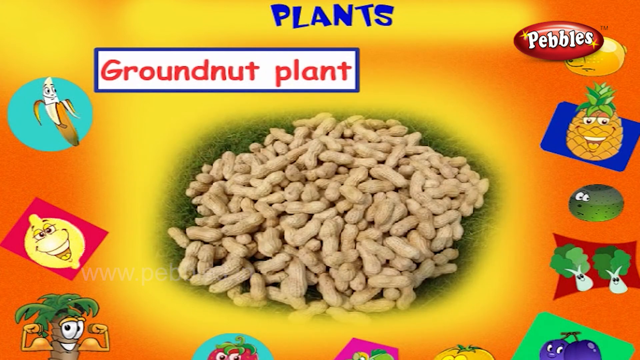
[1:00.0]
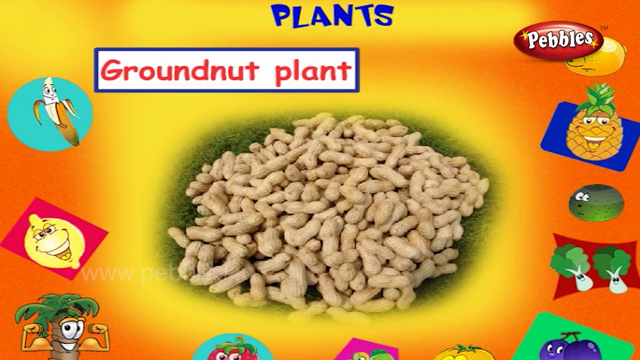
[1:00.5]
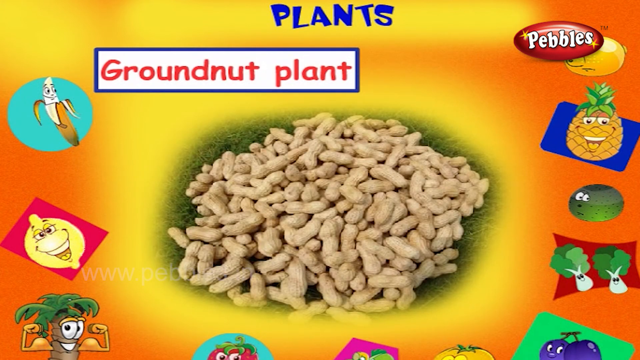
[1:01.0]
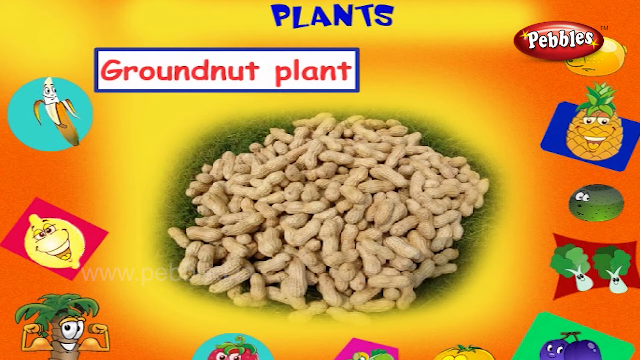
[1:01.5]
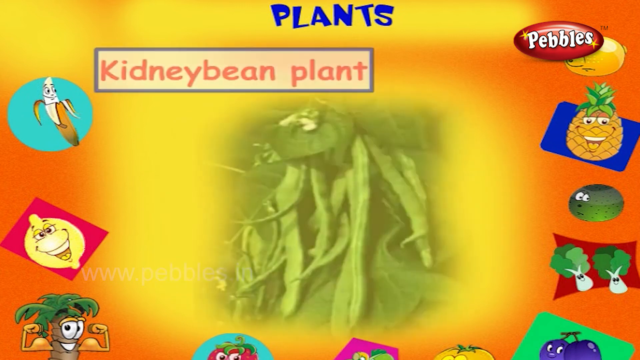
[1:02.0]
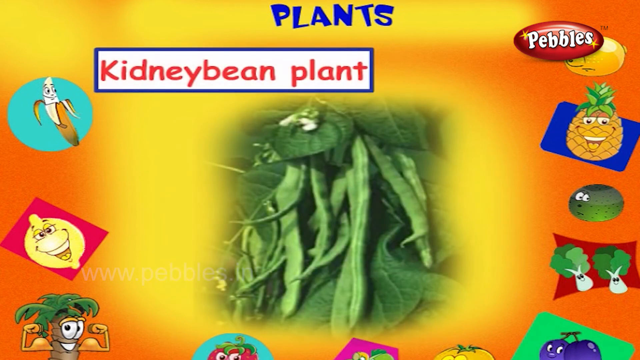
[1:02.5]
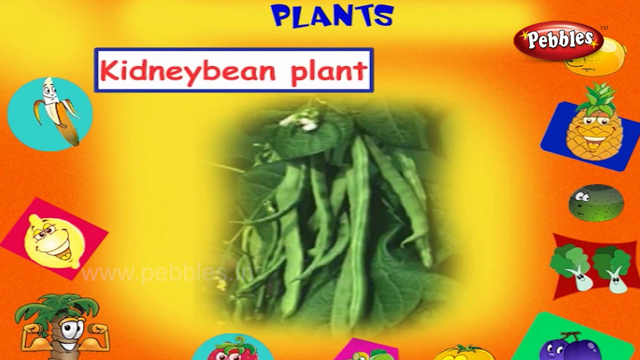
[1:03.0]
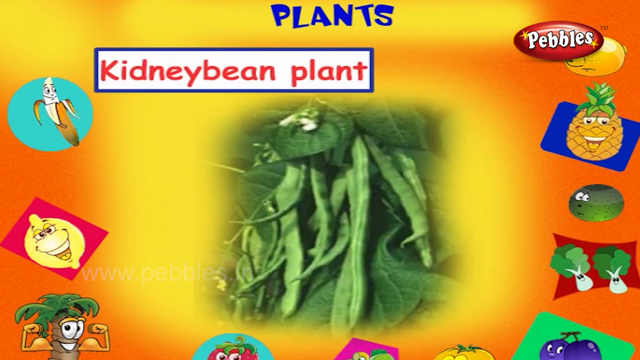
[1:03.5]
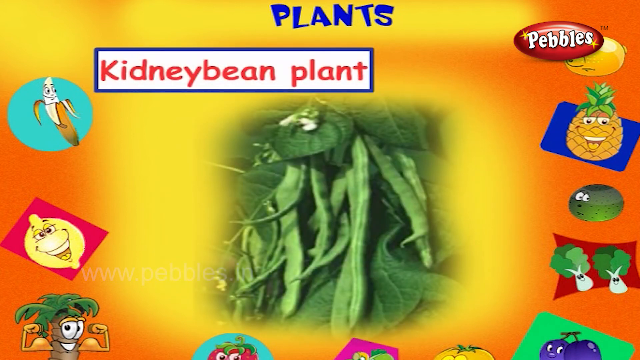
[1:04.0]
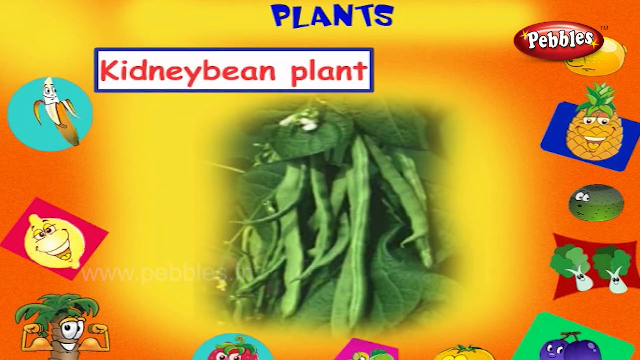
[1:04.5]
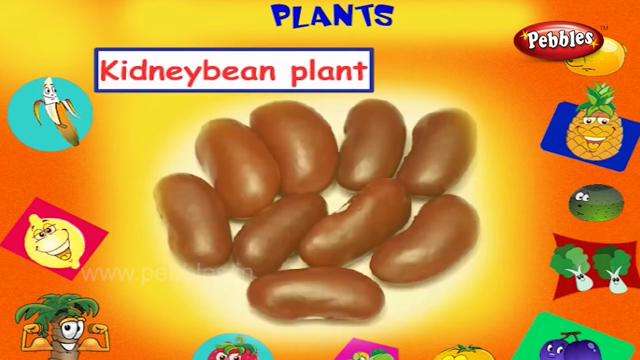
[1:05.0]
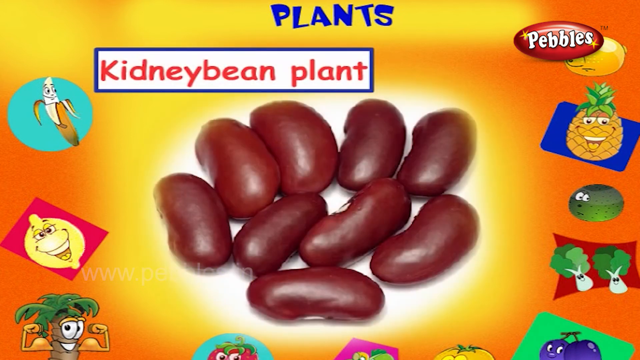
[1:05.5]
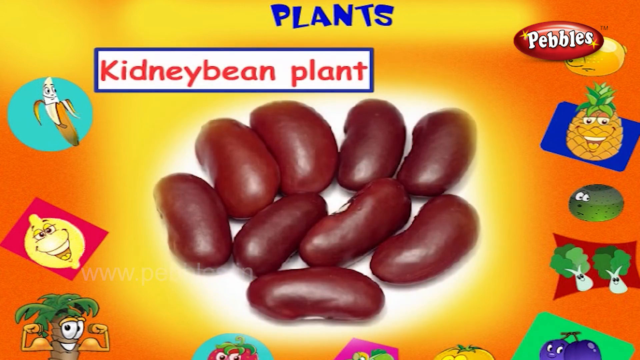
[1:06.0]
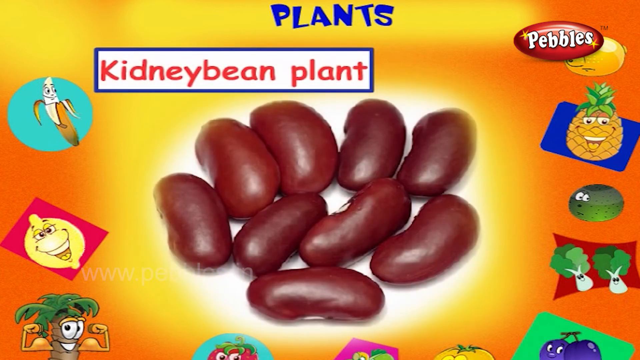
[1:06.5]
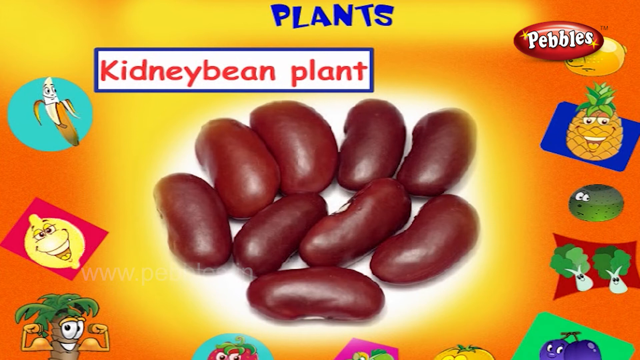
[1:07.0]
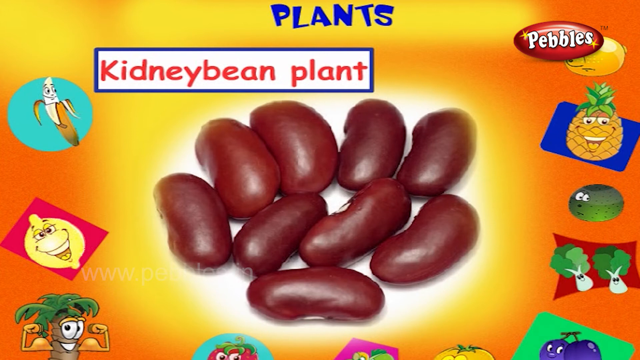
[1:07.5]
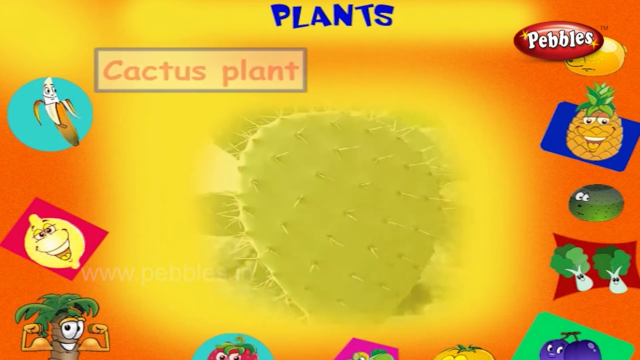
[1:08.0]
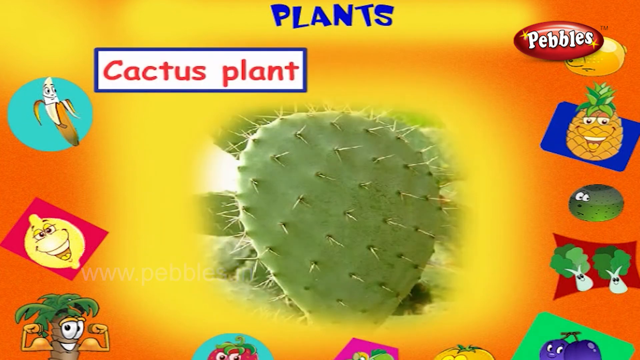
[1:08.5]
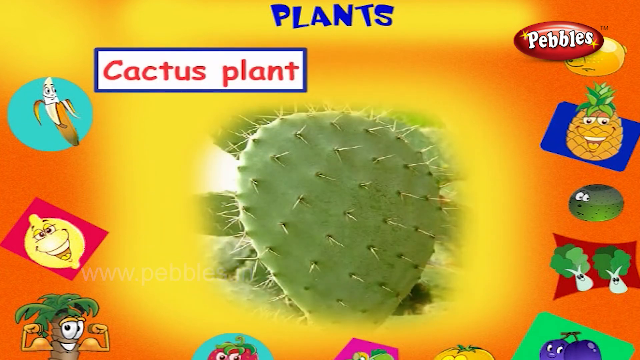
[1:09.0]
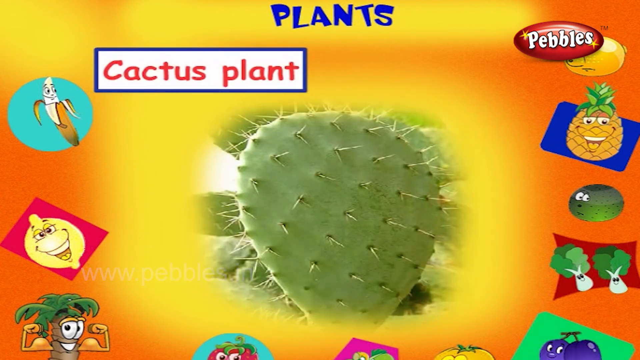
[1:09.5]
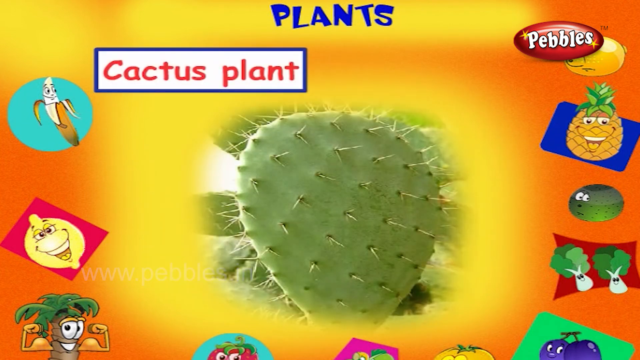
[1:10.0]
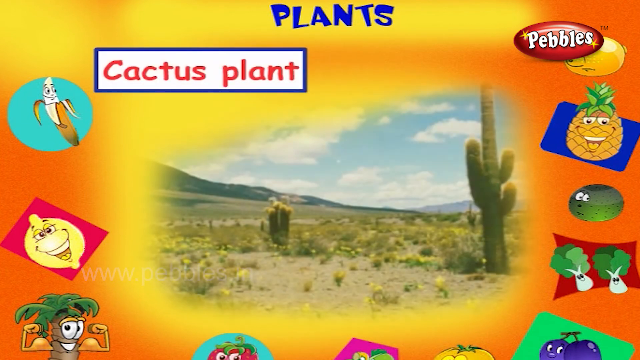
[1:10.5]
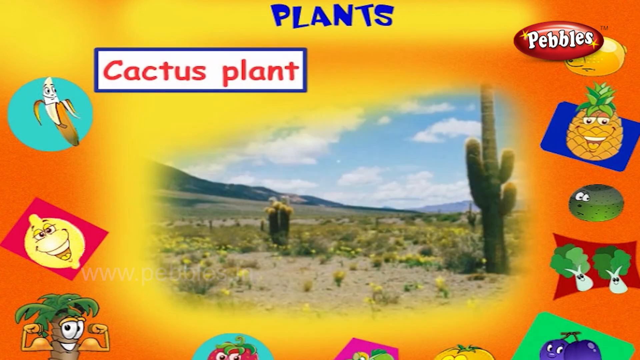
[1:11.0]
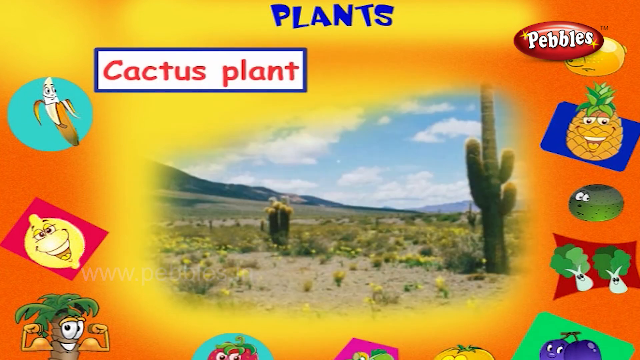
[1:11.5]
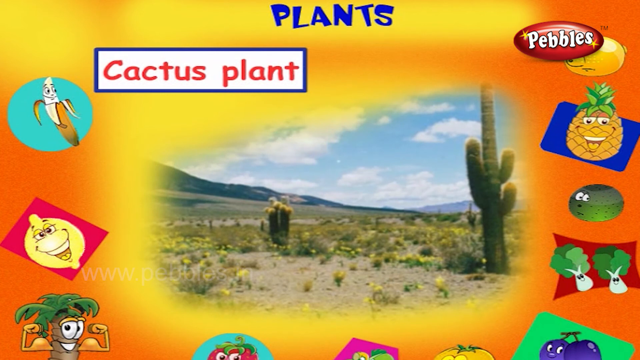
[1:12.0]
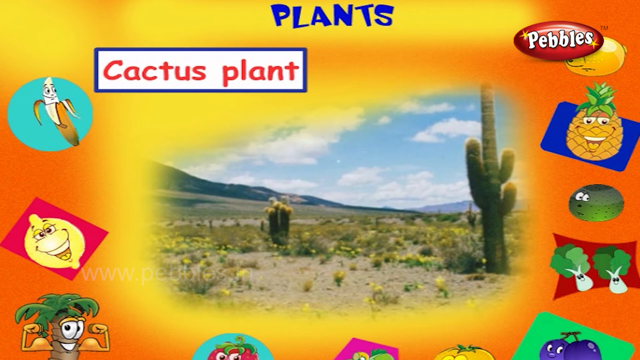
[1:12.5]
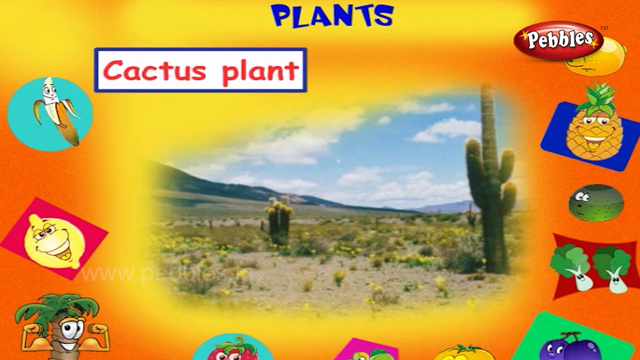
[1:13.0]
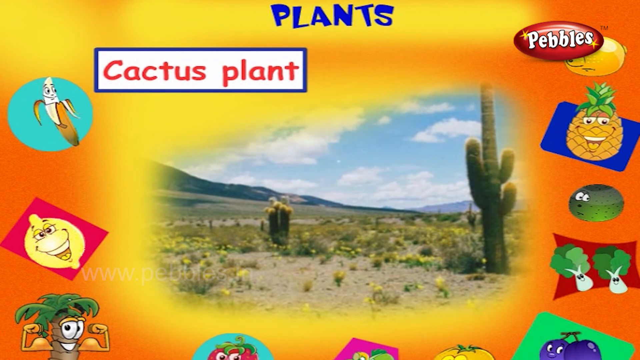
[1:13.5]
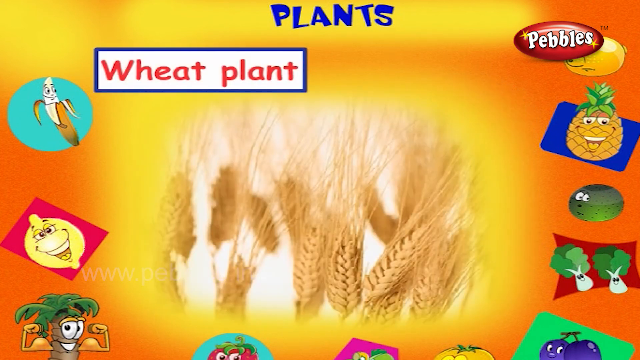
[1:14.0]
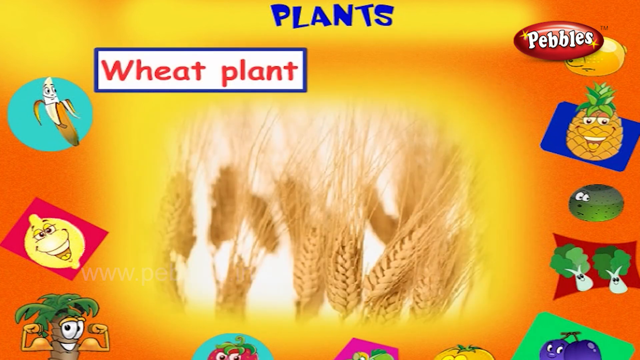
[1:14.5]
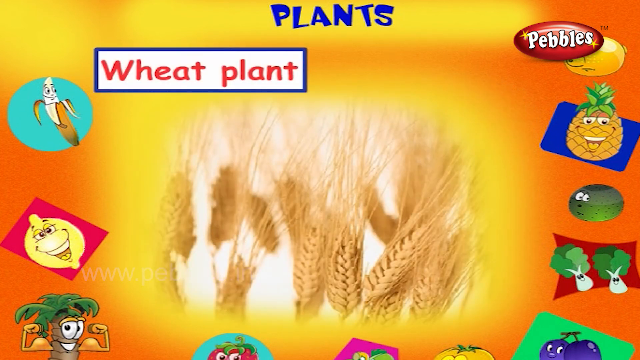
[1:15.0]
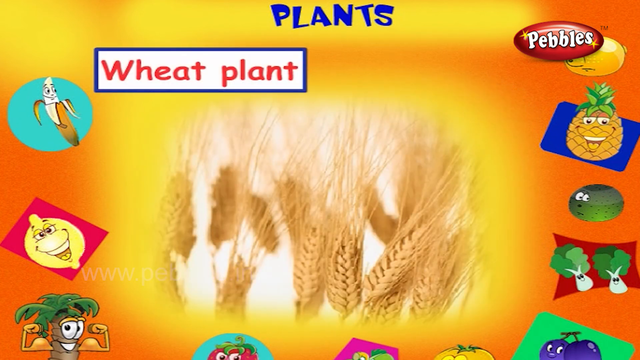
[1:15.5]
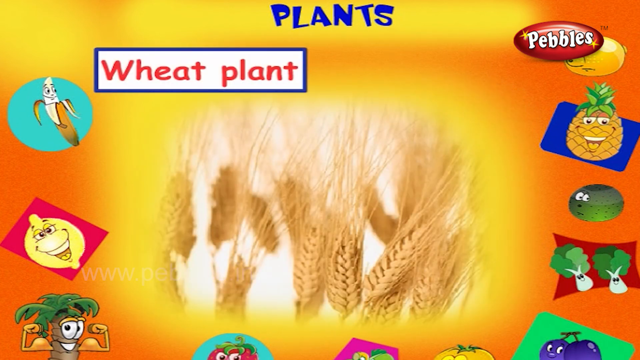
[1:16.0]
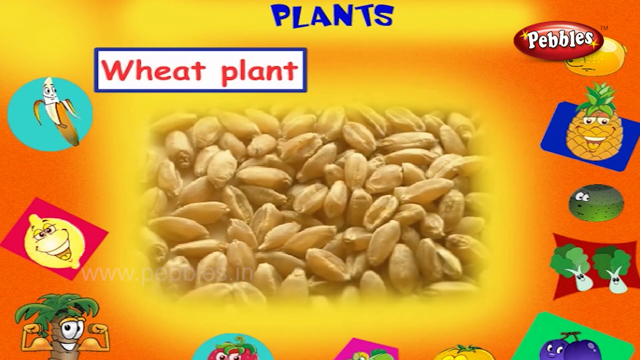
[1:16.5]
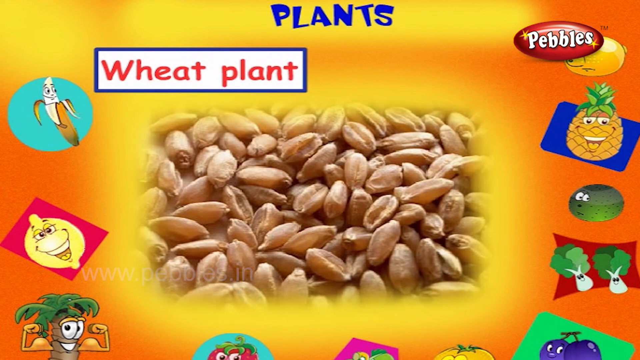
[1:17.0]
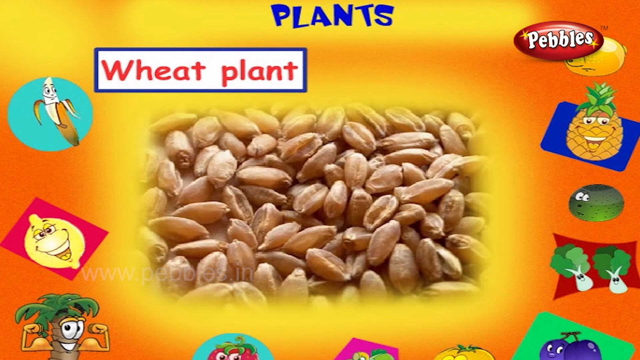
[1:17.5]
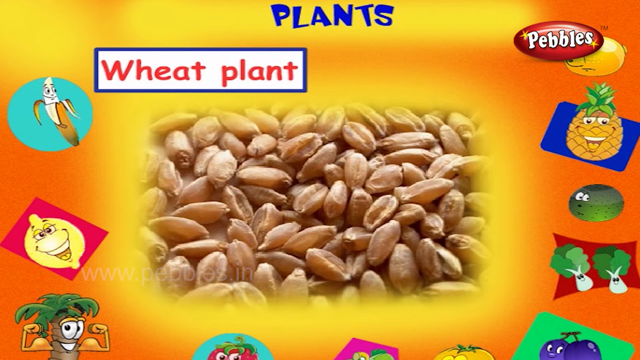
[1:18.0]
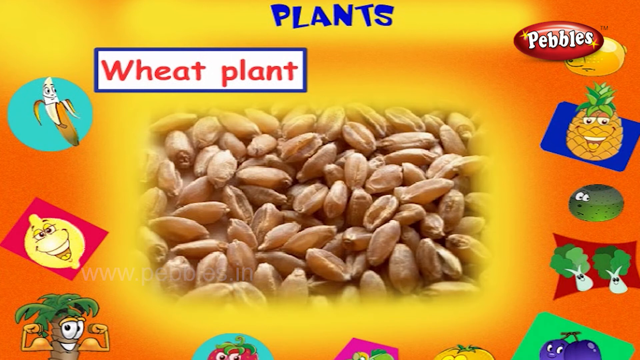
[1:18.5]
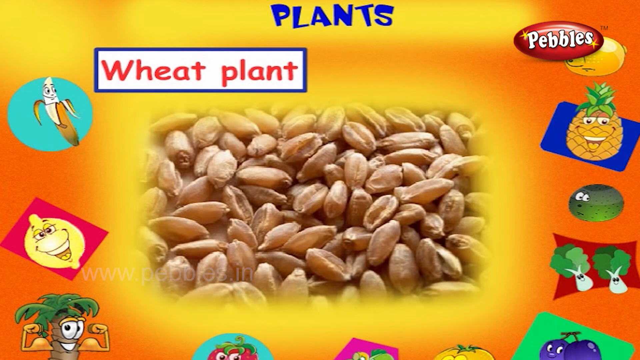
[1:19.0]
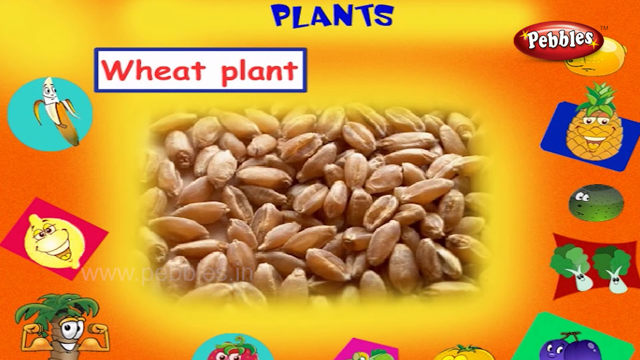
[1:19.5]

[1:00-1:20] A kidney bean plant is shown, followed by its end product, beans. A cactus plant is shown in the field, followed by the end product obtained from the cactus. A wheat plant is then shown, and at the end its product, wheat grains. Each plant is shown in the field and then its end product.